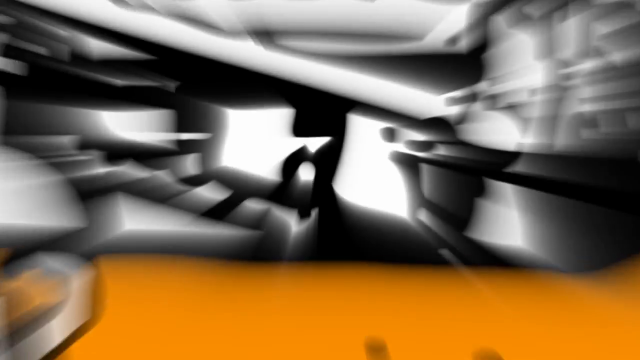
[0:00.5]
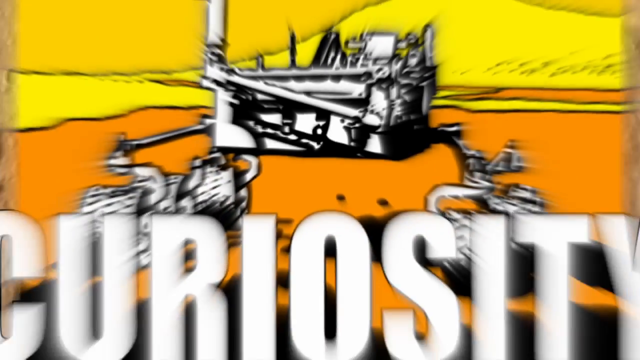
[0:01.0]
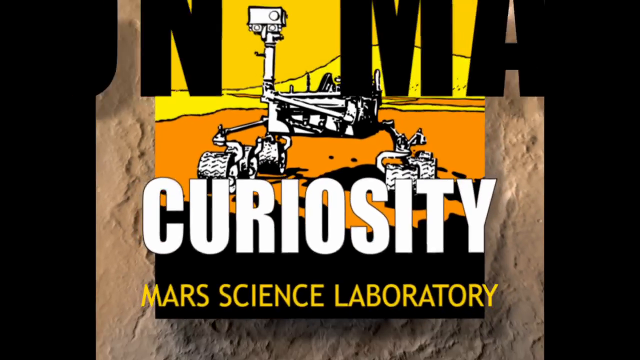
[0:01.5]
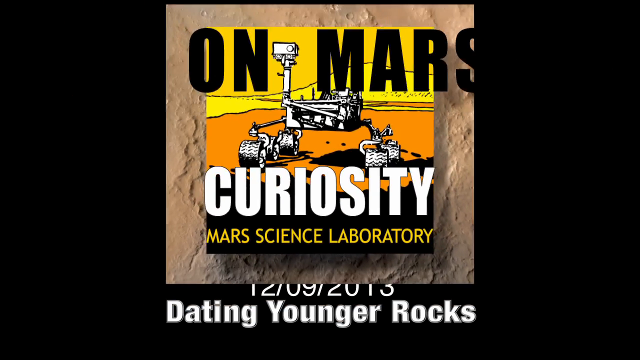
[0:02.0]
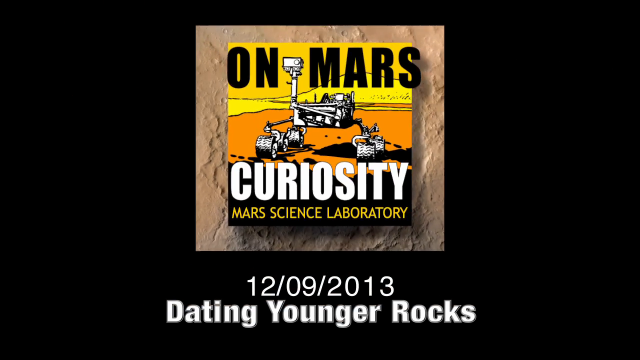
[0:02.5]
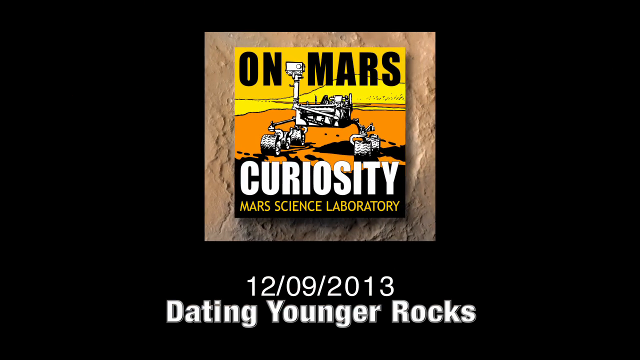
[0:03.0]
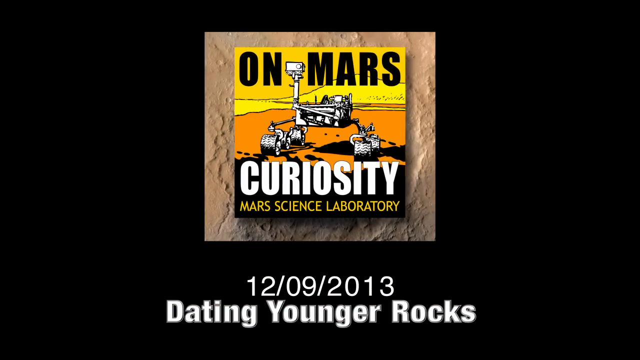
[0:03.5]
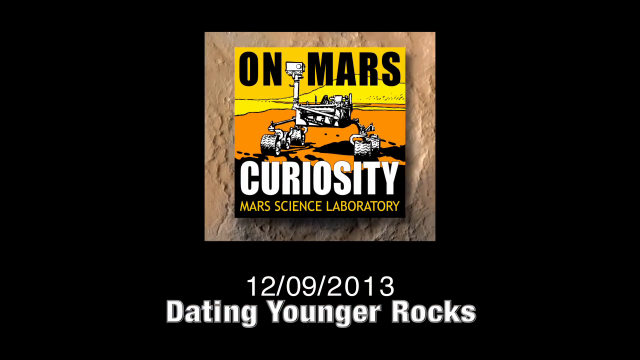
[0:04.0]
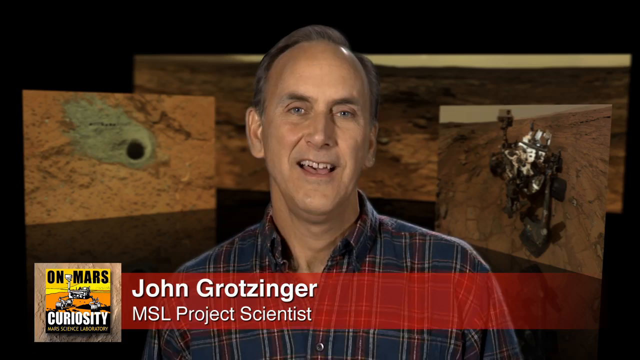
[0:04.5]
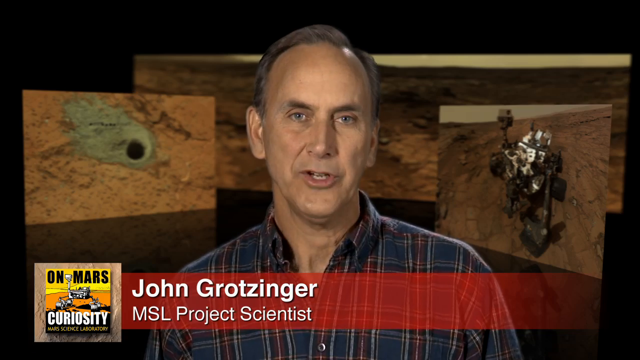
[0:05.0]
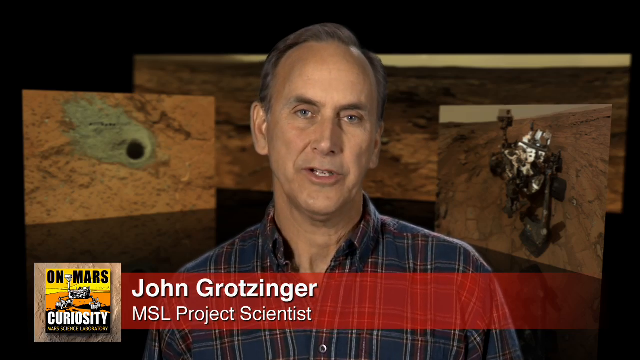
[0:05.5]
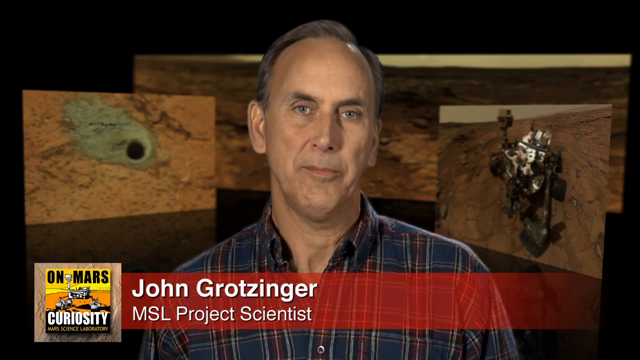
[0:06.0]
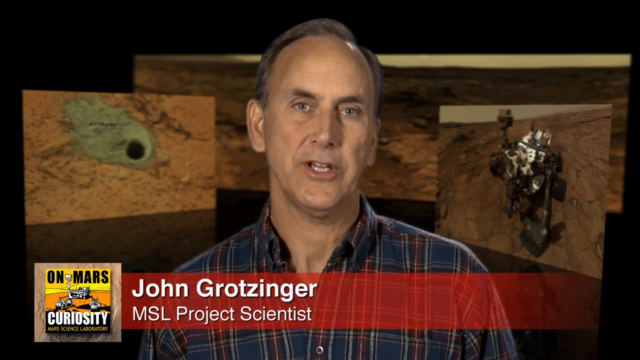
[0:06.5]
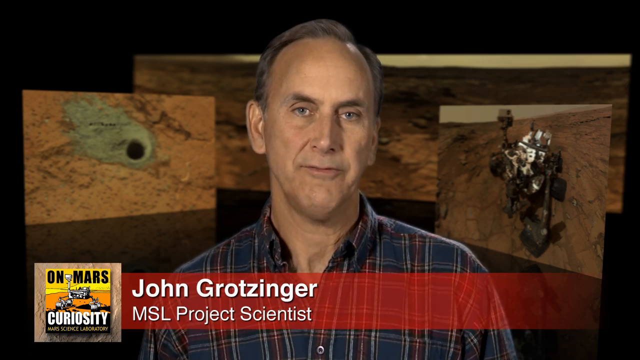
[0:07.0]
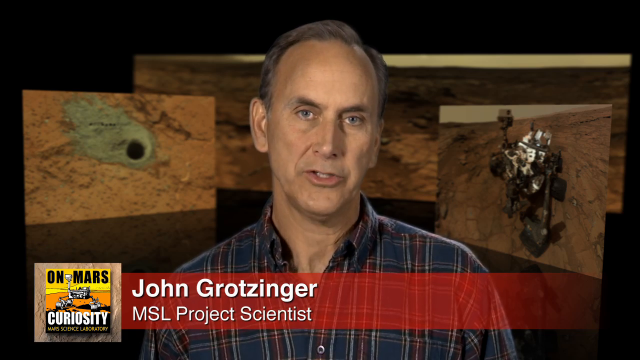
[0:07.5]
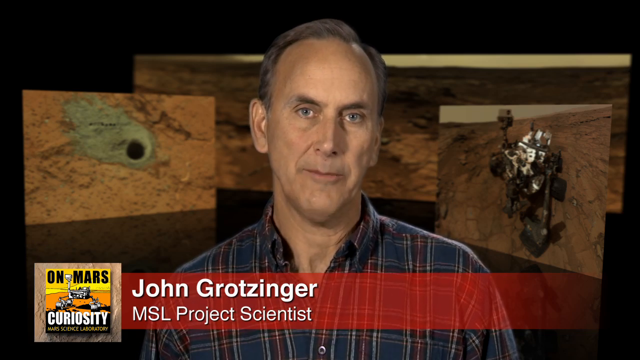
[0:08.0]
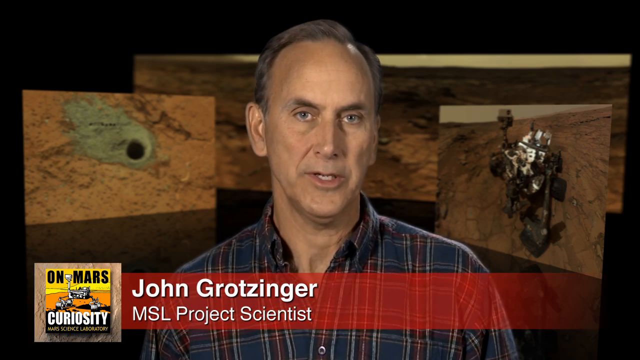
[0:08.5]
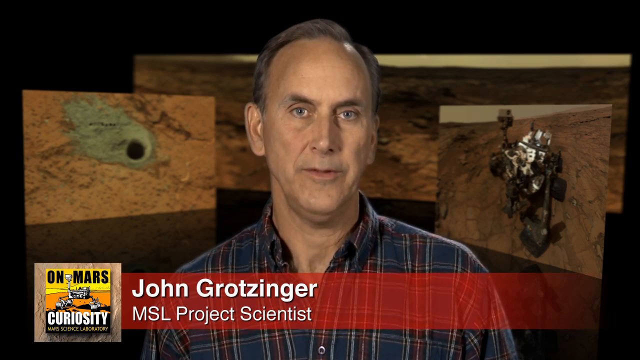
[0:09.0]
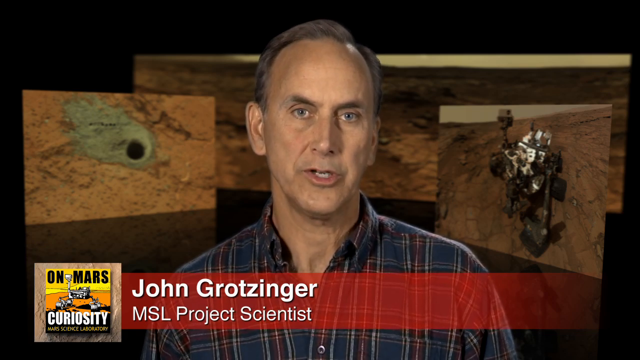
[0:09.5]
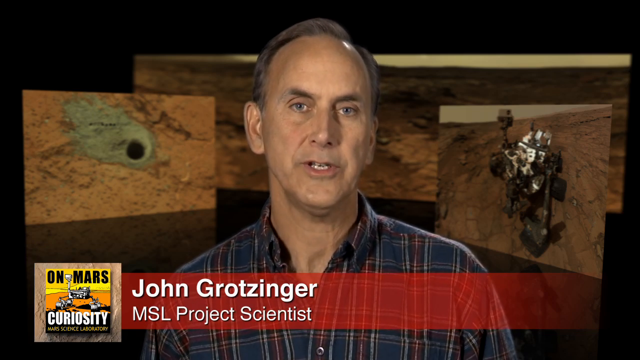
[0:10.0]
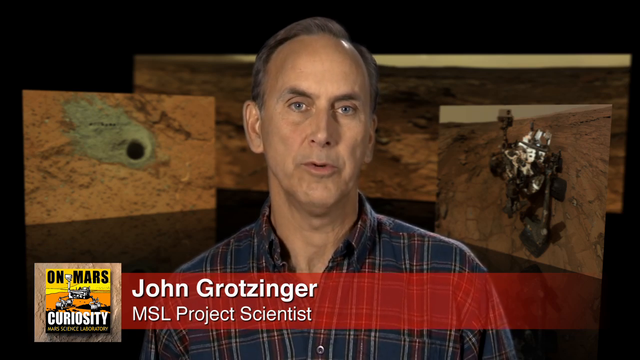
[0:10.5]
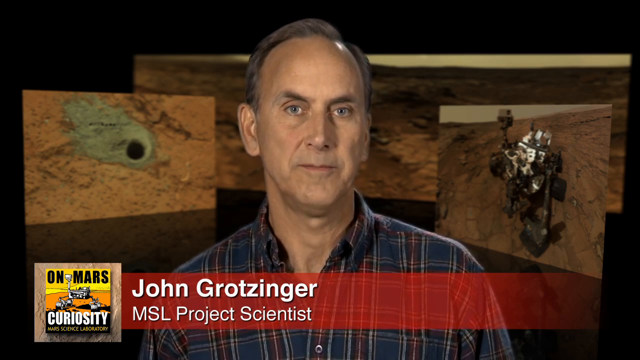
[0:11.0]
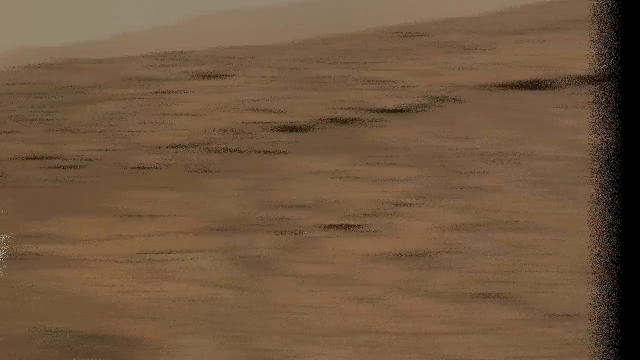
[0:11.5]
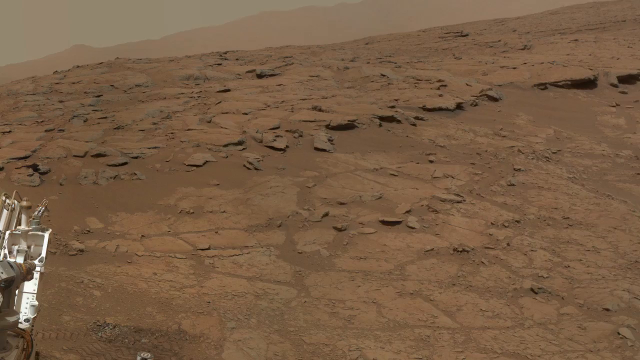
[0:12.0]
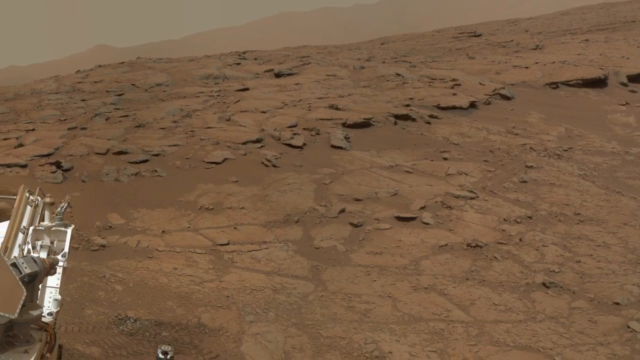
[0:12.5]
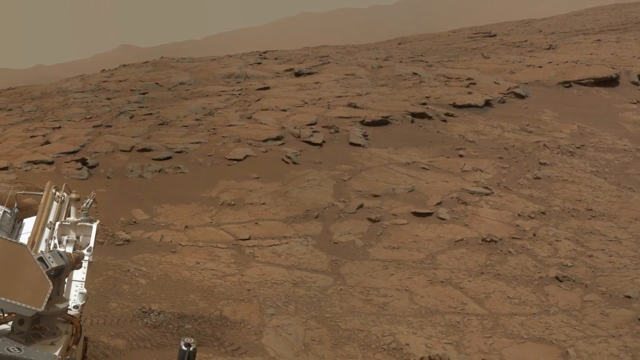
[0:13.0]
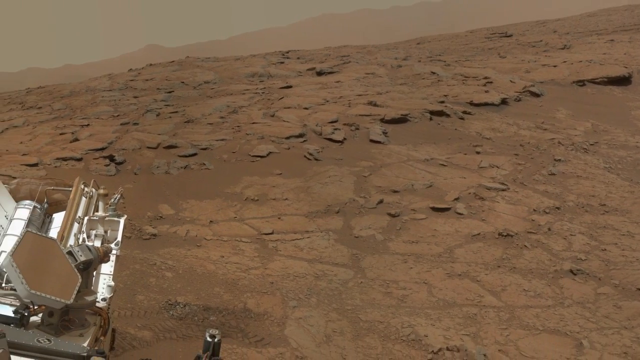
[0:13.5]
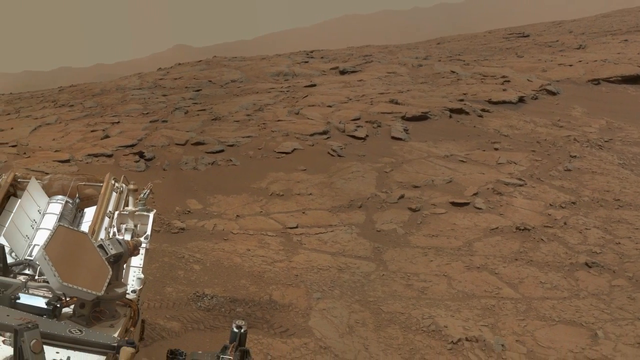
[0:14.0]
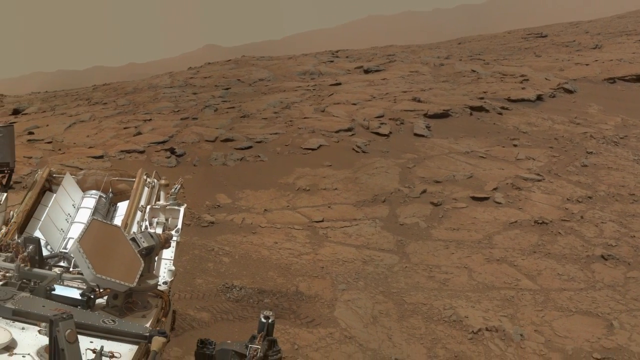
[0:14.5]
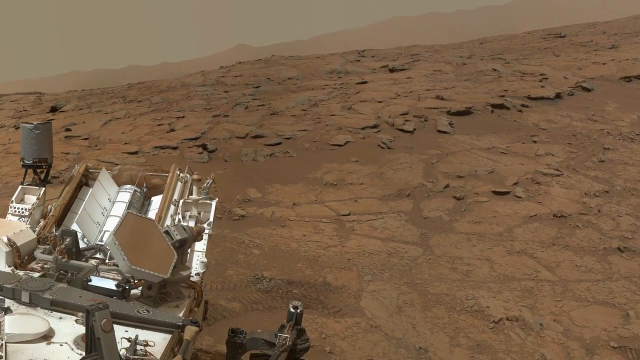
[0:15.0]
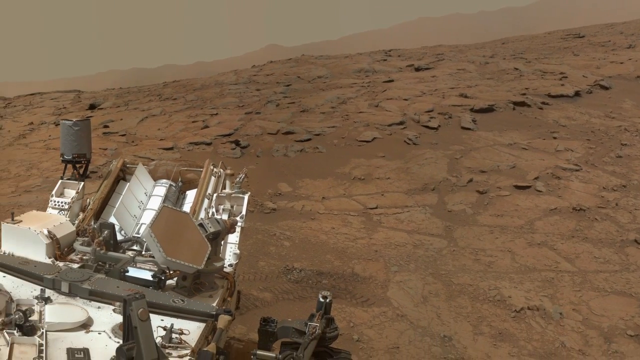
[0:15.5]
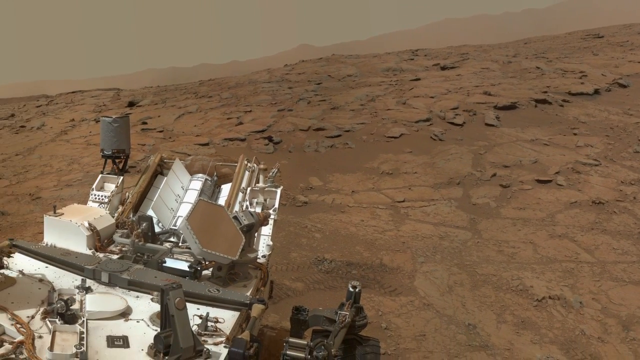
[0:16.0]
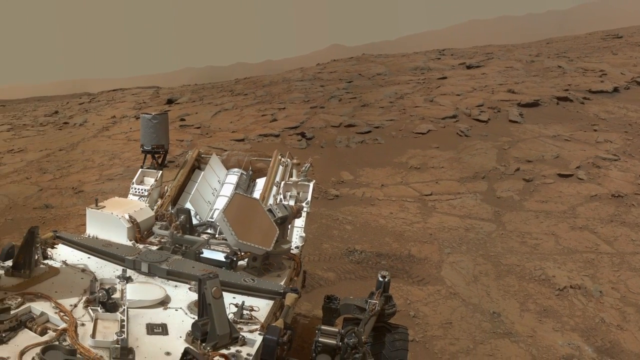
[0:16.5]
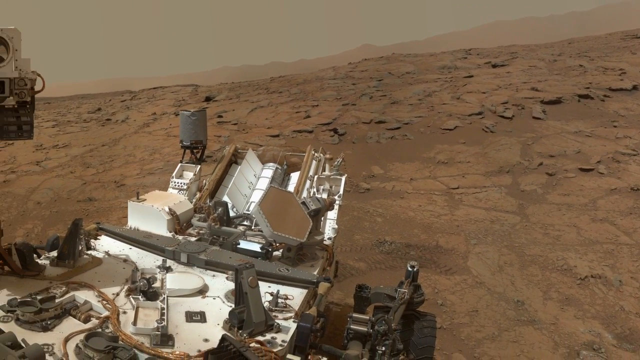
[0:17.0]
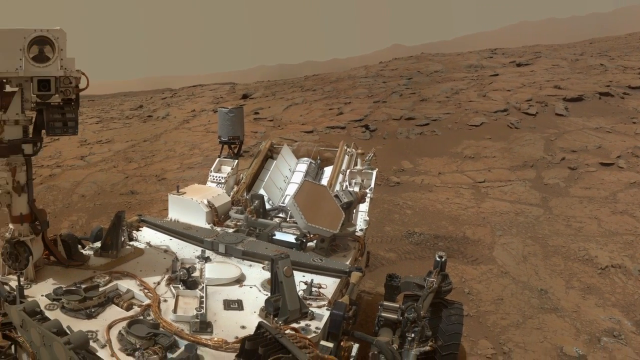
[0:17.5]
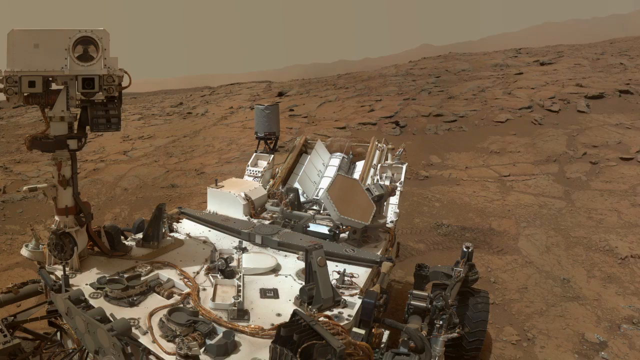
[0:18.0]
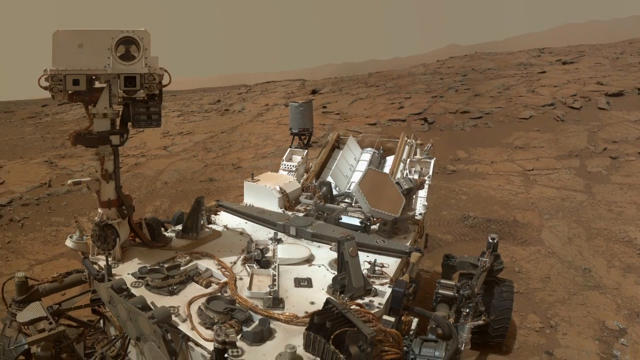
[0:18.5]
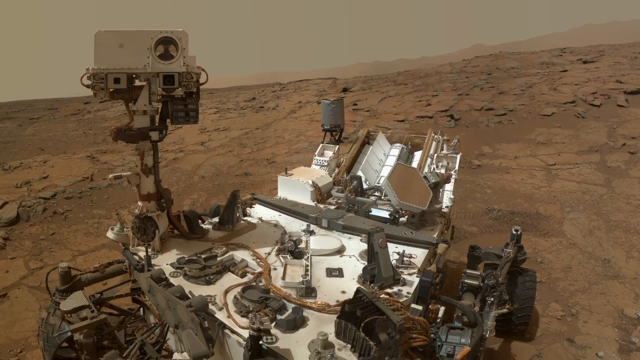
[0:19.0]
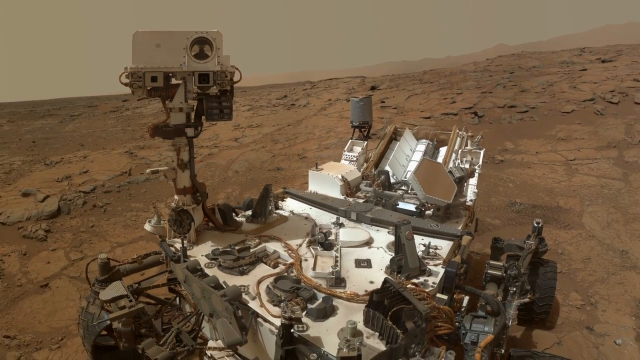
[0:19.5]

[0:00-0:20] The video concerns a Mars project. A researcher, apparently an MSL Project Scientist, shows a big piece of equipment placed on Mars that is exploring the planet. Behind him are pictures that look like the planet Mars. It is unclear whether he is there himself or whether this is just equipment he uses for his research. Text says it is a "Mars Curiosity rover report."